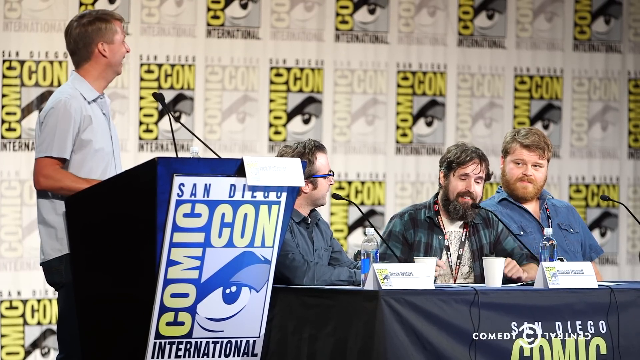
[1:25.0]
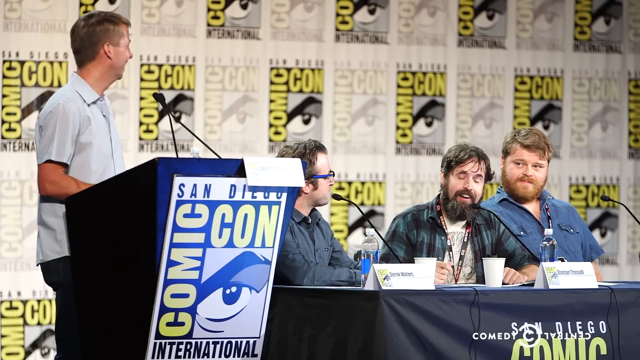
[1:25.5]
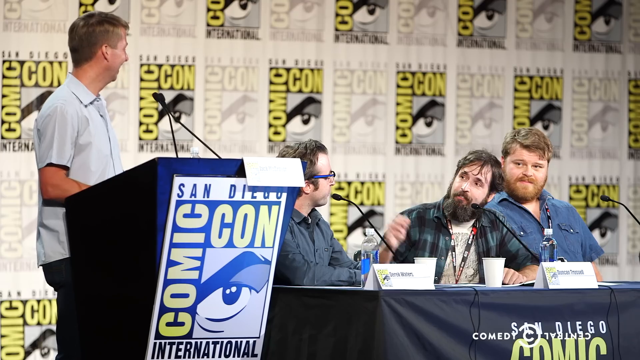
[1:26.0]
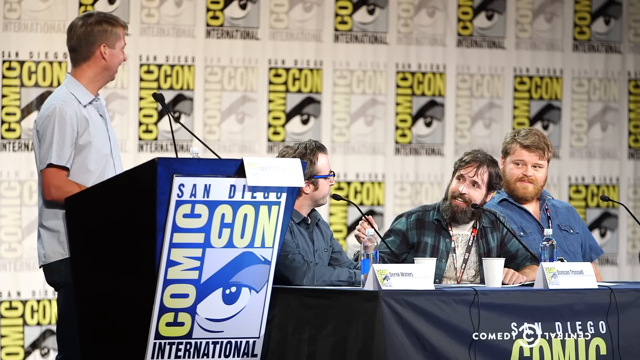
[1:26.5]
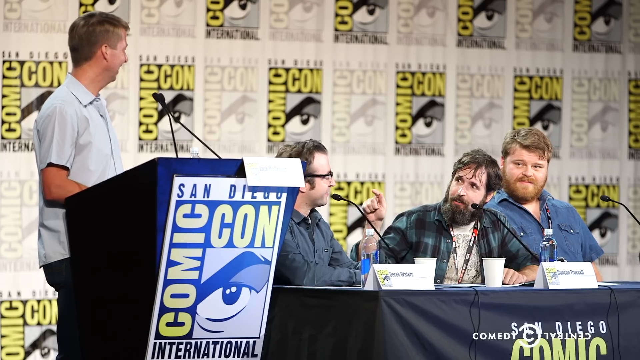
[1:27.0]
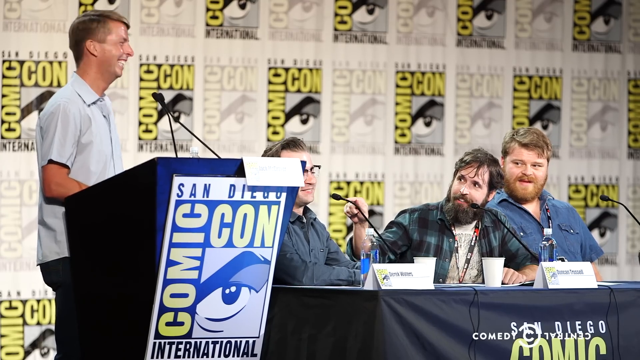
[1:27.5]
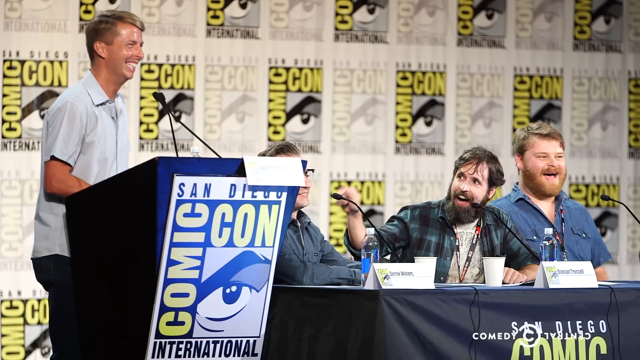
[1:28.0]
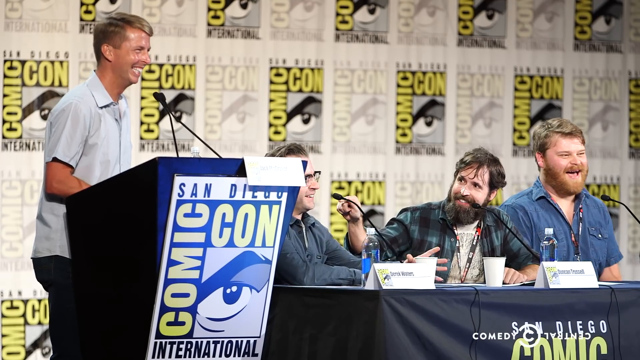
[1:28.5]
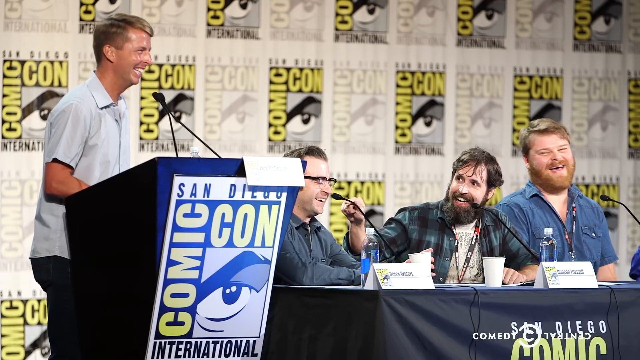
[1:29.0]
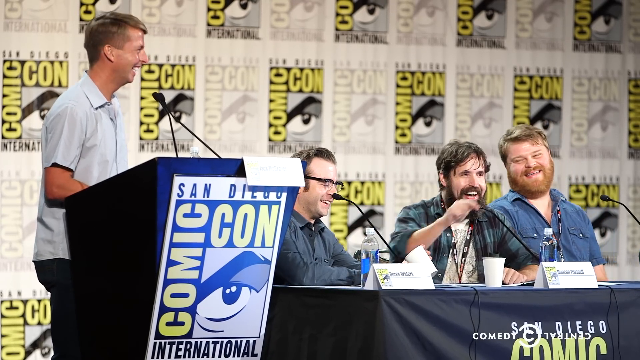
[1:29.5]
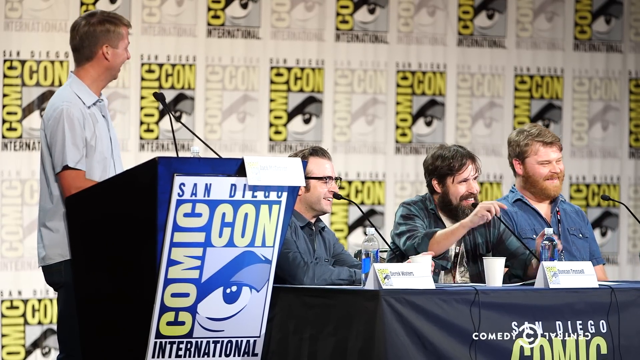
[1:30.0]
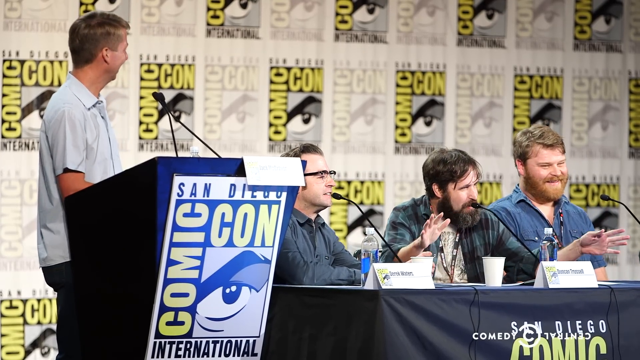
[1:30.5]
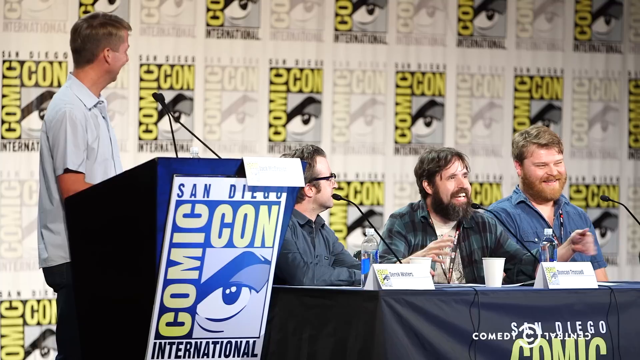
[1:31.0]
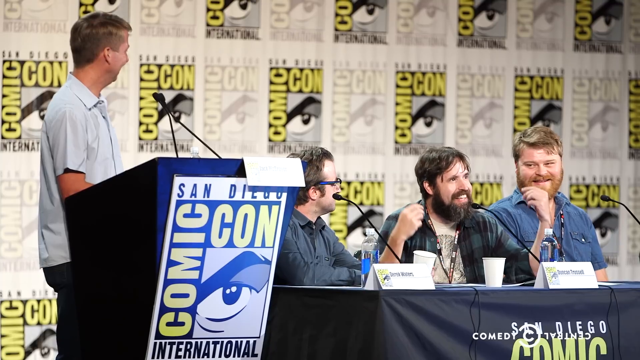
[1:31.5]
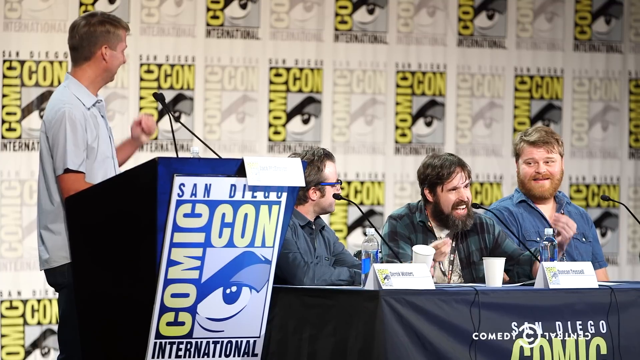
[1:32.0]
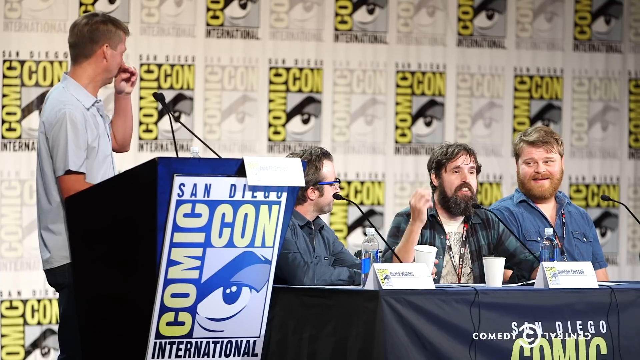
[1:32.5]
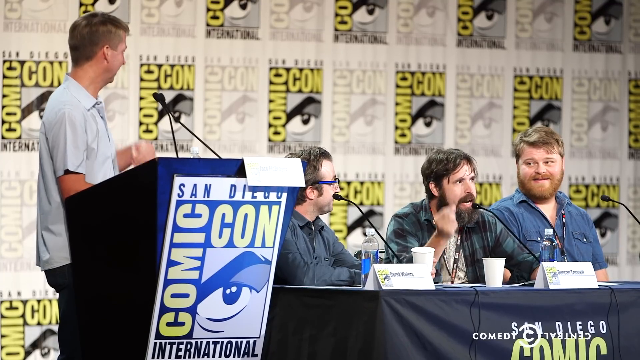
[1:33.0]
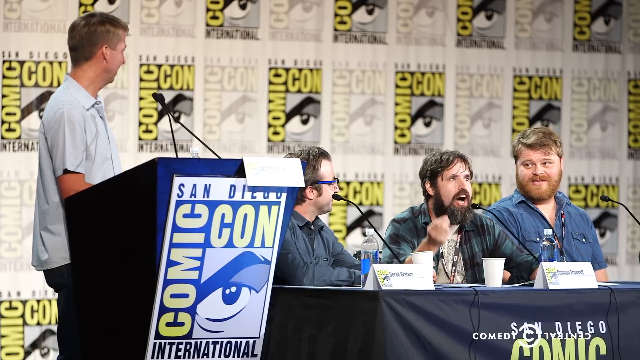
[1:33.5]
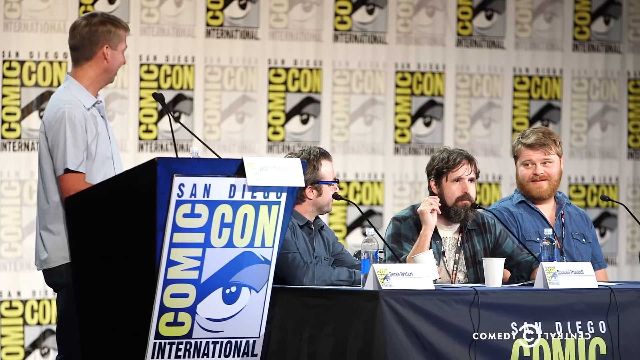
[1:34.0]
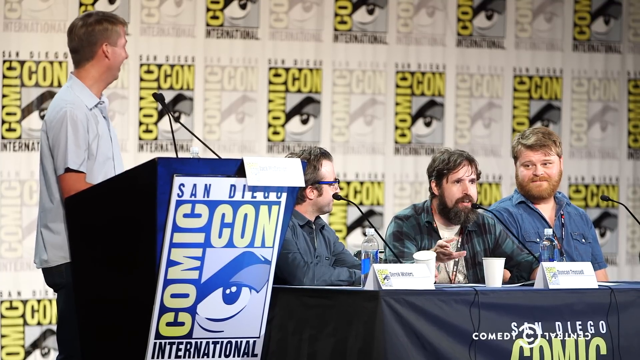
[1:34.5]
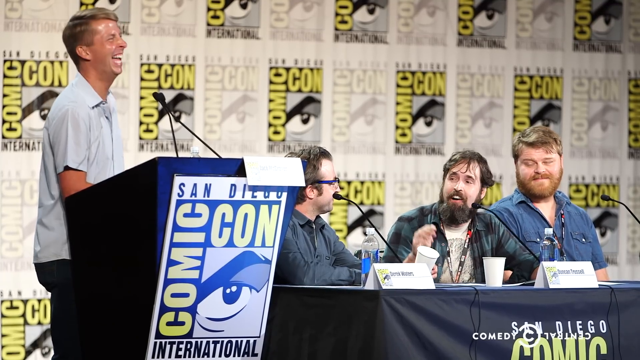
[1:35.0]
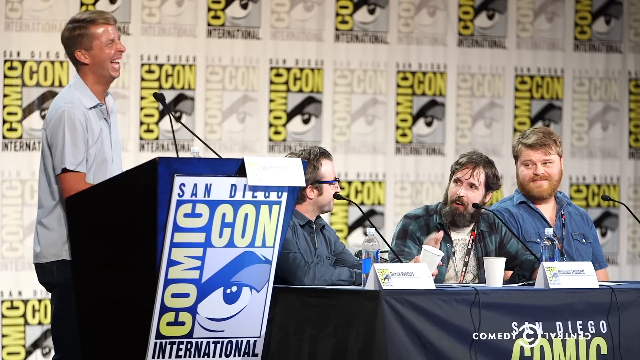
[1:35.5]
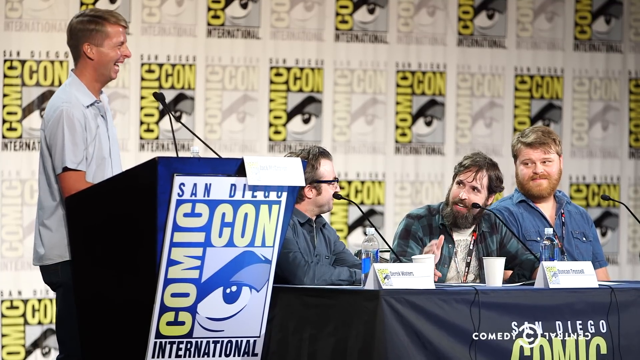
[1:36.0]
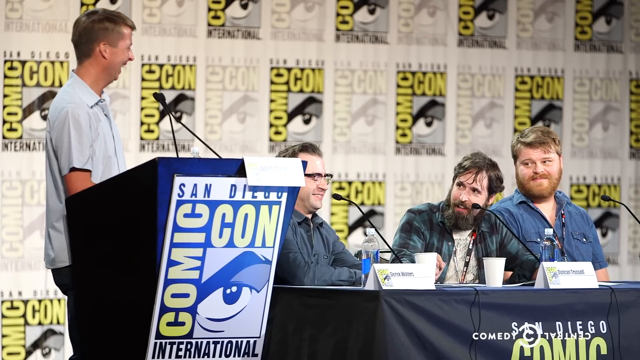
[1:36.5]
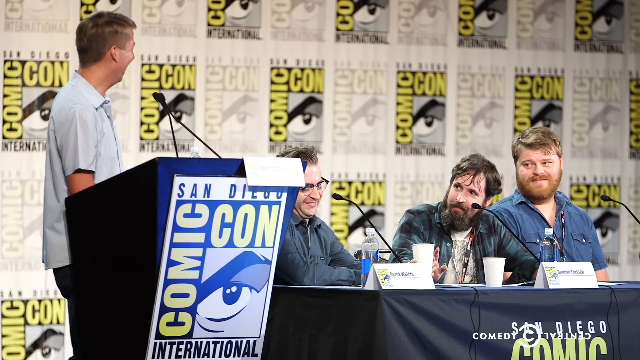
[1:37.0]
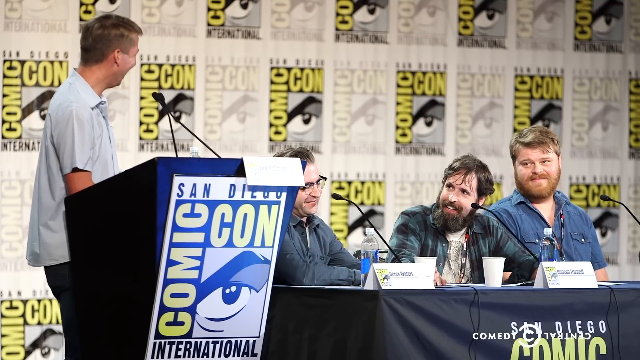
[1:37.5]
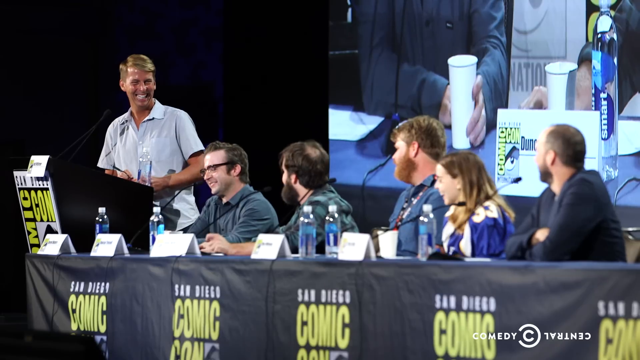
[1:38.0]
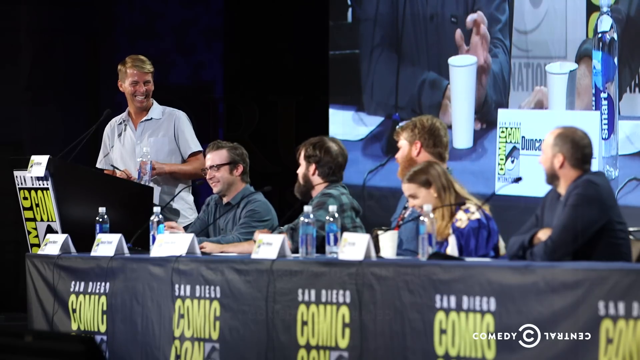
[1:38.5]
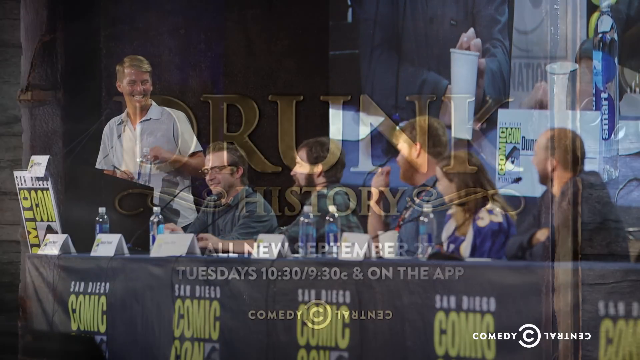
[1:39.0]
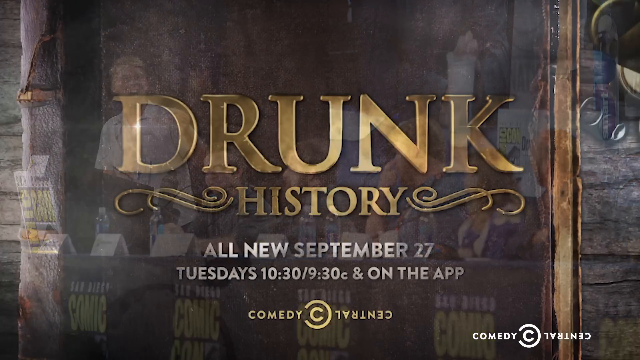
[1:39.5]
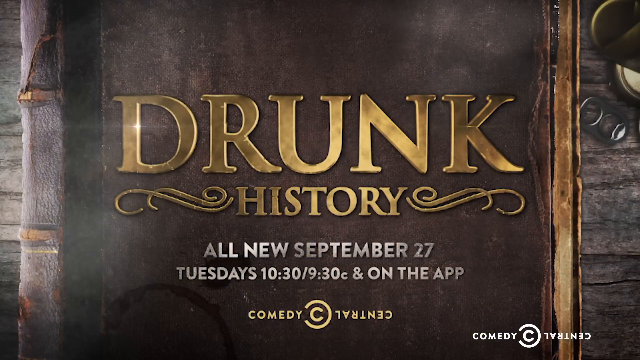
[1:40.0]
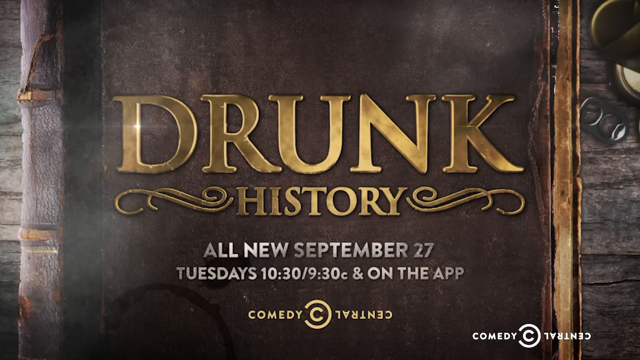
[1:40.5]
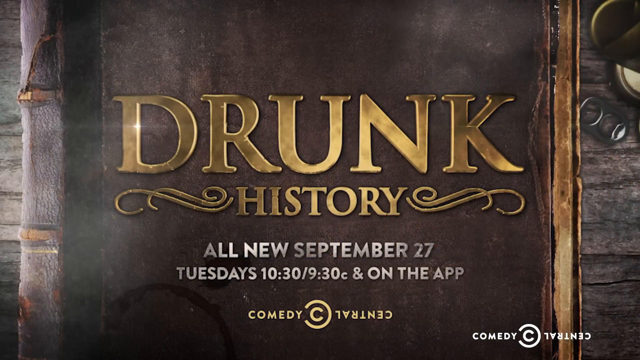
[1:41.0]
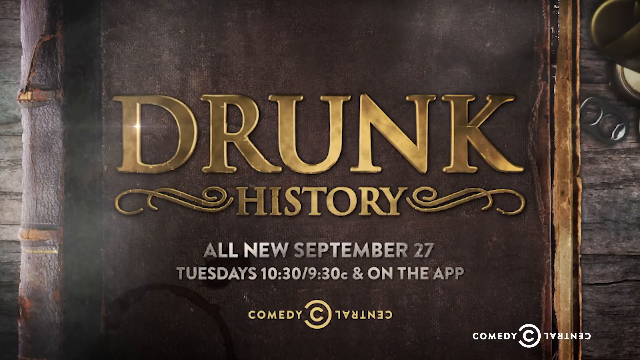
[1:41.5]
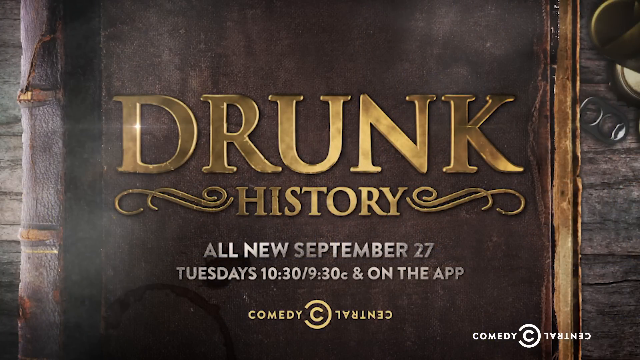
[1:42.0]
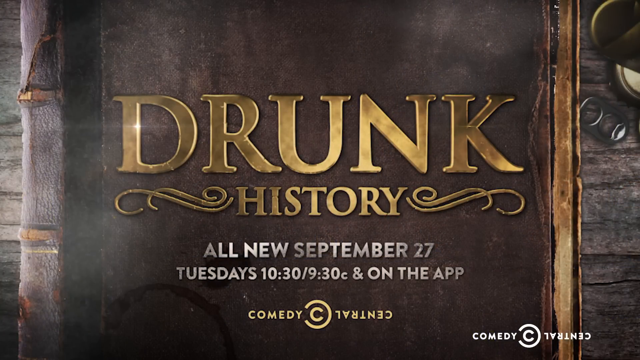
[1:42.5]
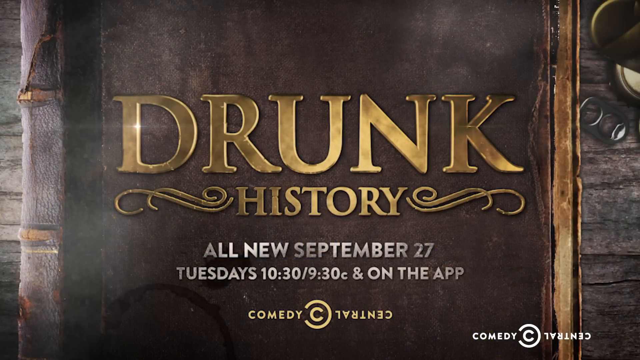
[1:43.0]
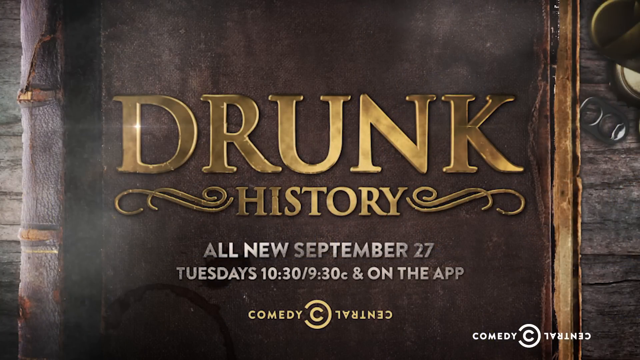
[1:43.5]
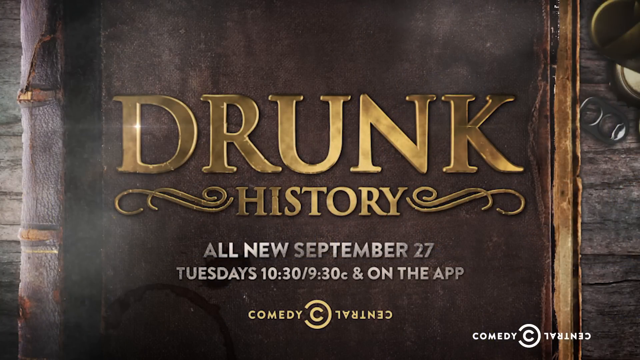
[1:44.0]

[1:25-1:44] Duncan is still talking, seen from the left-side angle, and his hands are much more animated now. He holds his right hand up toward his face with finger and thumb touching. The view pans out, and he puts his hands out wider as he talks more animatedly, then goes back to one hand. He looks directly at the man in the glasses as he talks, then points at him, then points at the crowd, opens both hands in front of him, closes both hands, and goes back to pointing with just his right hand. The video cuts to a wide shot from the right where all of them are visible, with a little bit of video in the background; from the left side, only the comic-con in the background can be seen. As Duncan talks, the man with the glasses laughs, the man on the right side with the beard and blonde hair laughs, and Kenneth laughs pretty hard. On the background screen, someone in a black coat holds something white and plastic in their hand and seems to bring it down. Trussell is very animated here, and the Comedy Central logo is still at the bottom. Kenneth is talking at the podium, which is black with the comic-con design on the front. Then it cuts to the book, which says "Drunk History, all new, September 27, Tuesdays at 10.30 on Comedy Central."